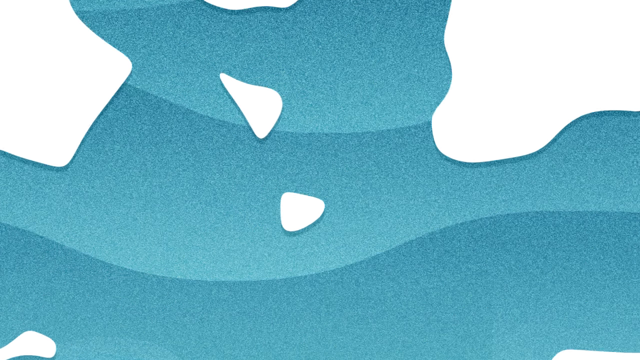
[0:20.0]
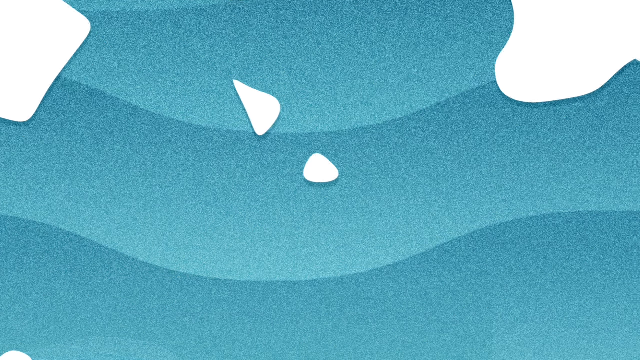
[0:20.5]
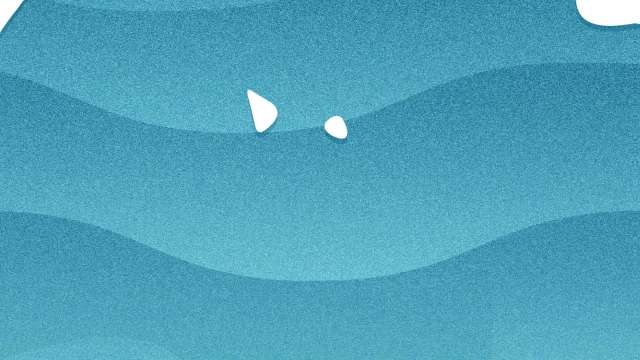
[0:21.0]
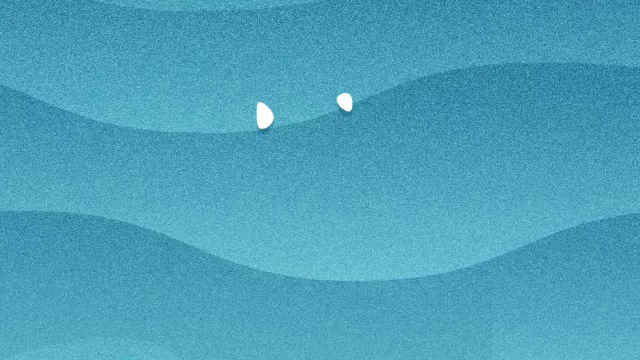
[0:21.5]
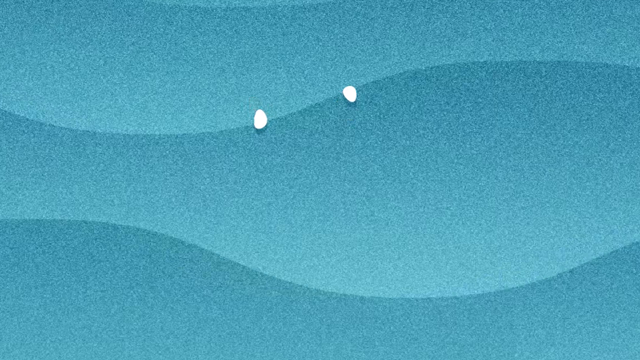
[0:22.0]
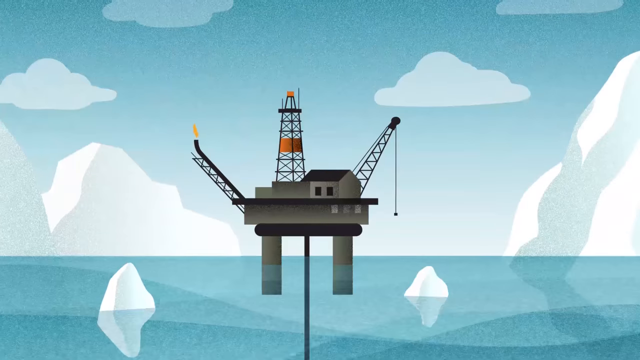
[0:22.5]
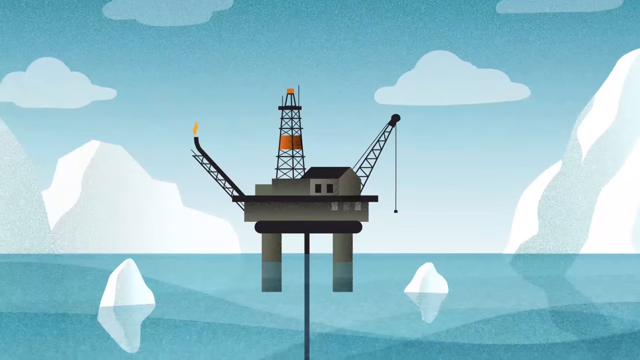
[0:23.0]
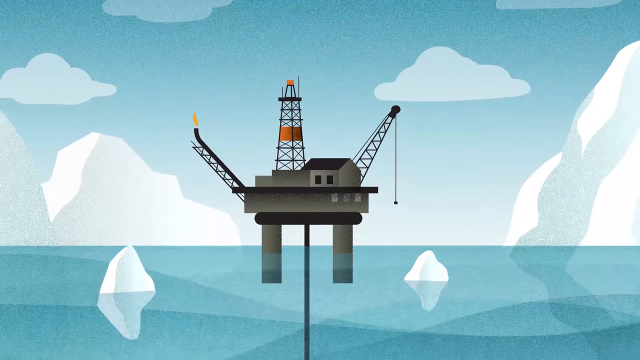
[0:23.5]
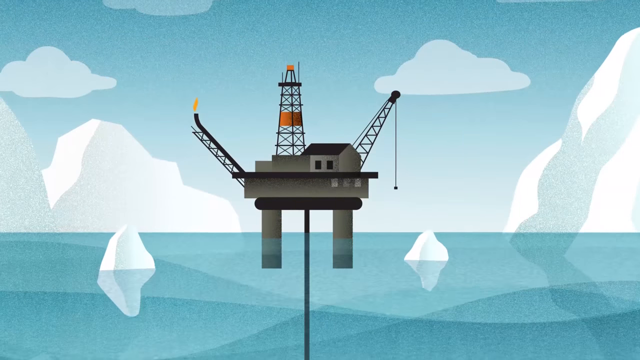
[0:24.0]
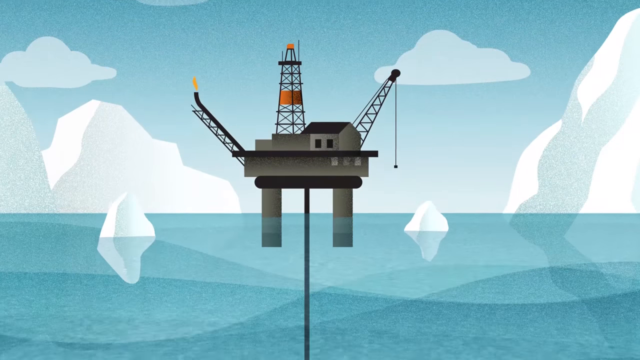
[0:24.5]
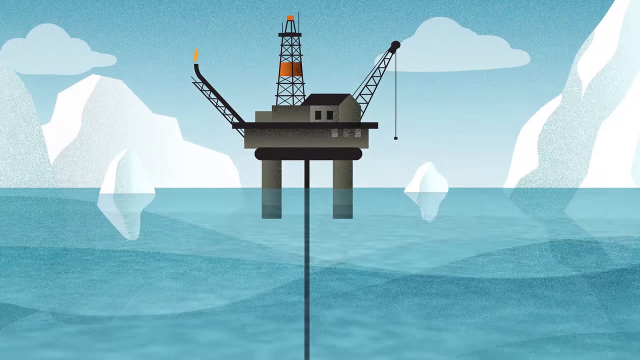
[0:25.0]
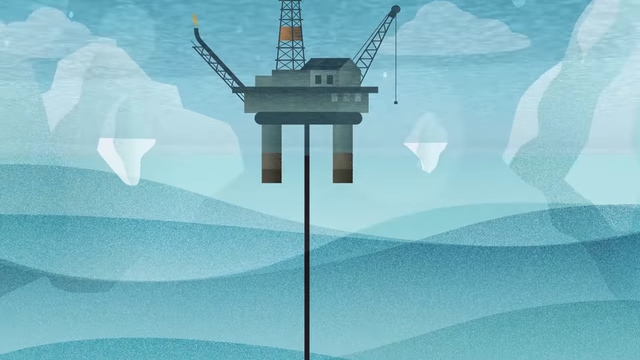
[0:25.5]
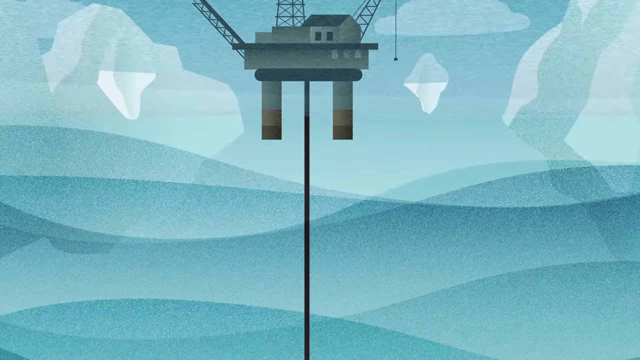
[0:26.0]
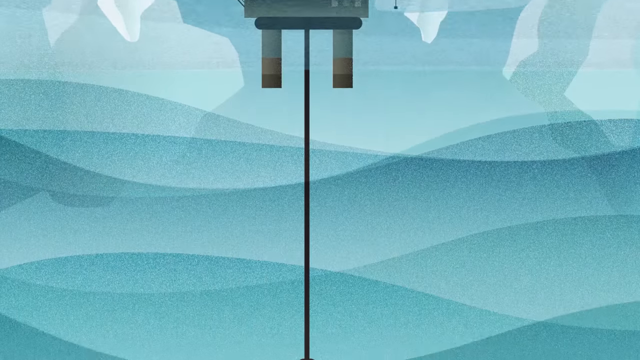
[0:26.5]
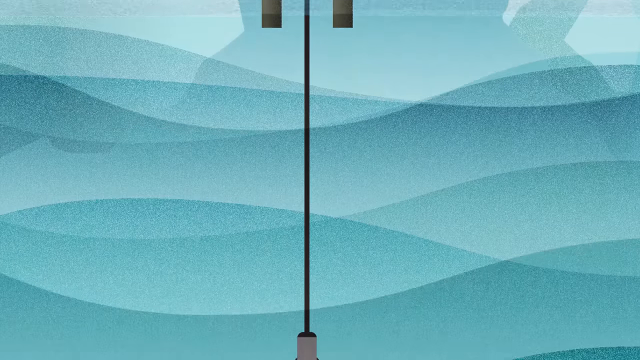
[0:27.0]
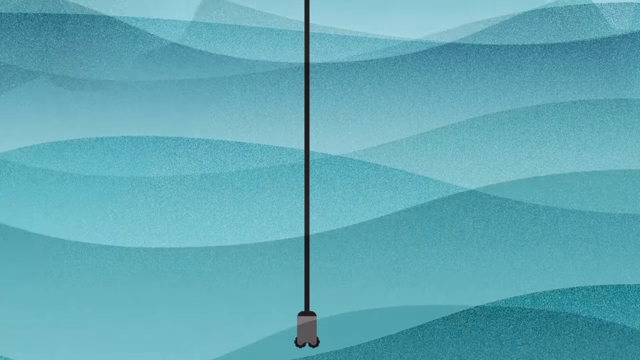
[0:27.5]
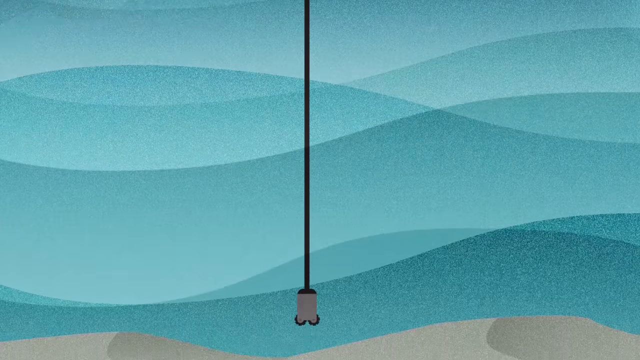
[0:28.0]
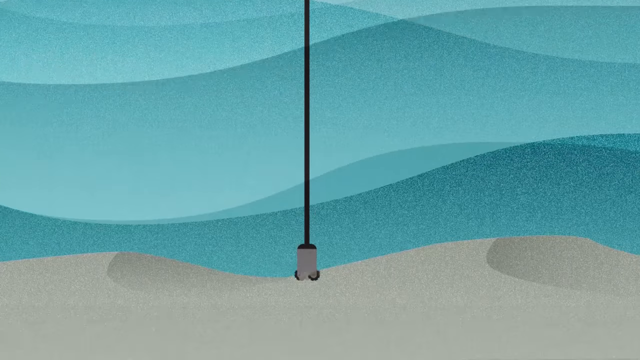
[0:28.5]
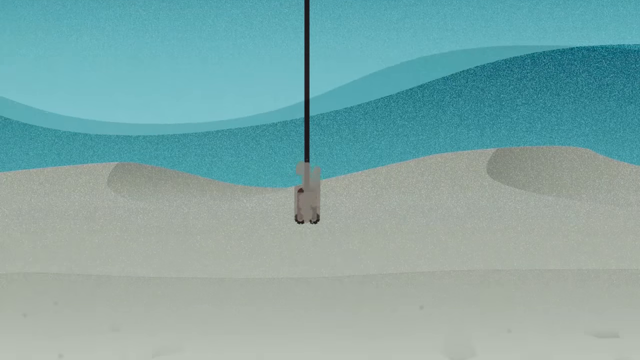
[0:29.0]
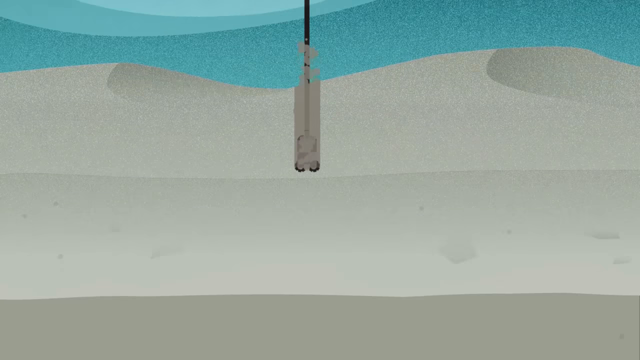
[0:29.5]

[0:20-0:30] The same blue ocean with stylized waves appears, with the camera angled below the surface and some pieces of ice floating in the water. As the camera moves upward, it comes to a large oil rig on top of the water, with cranes and pulleys, a tower made out of wire, and a house-like structure on it. No people are visible. The oil rig sits on two large pylons sunk into the water. It is surrounded by white icebergs, and in the sky there are stylized puffy white clouds. Two smaller pieces of ice float on the surface of the water. Gradually the camera pans back down, and the oil rig sinks a piece of equipment into what is probably an oil pit below the sand of the ocean bed.